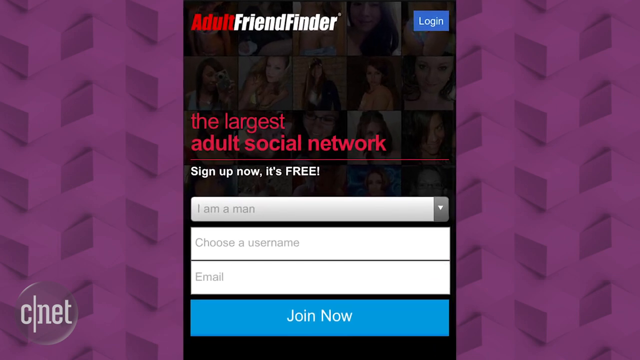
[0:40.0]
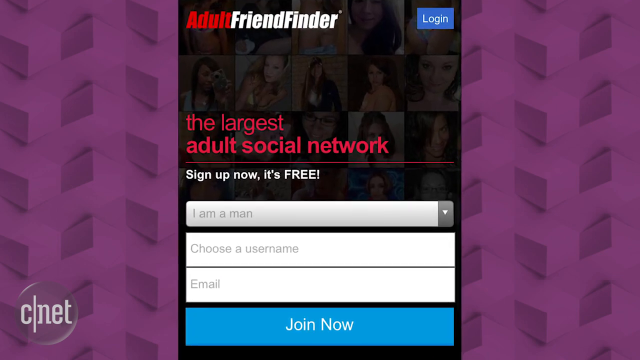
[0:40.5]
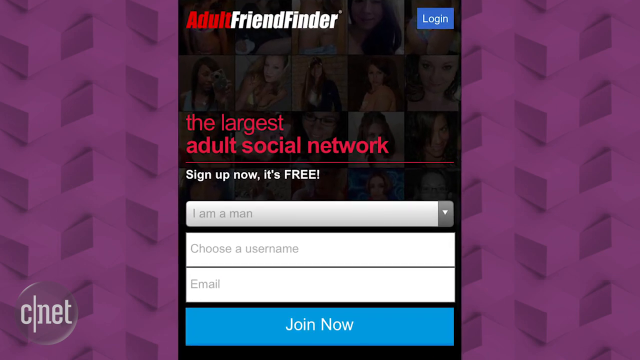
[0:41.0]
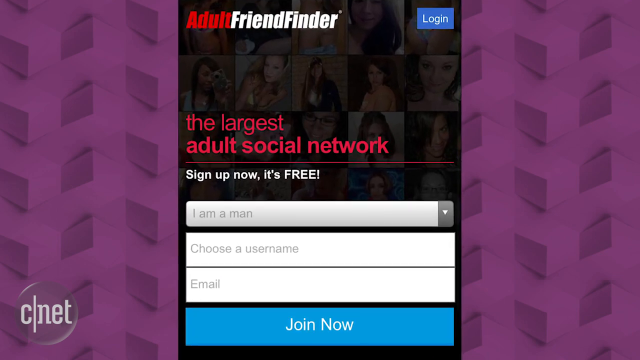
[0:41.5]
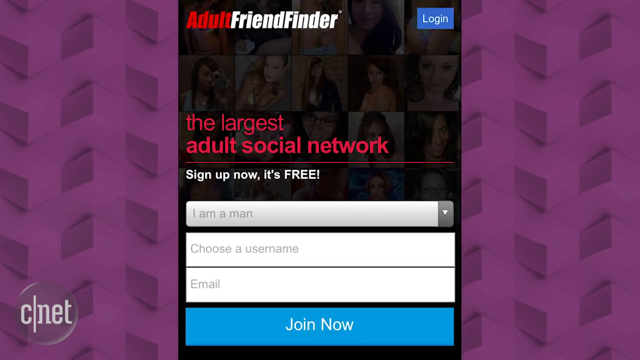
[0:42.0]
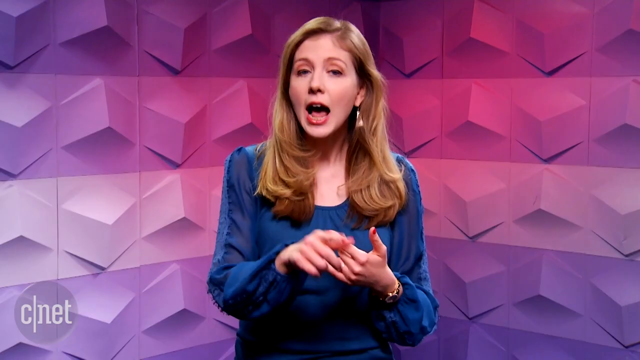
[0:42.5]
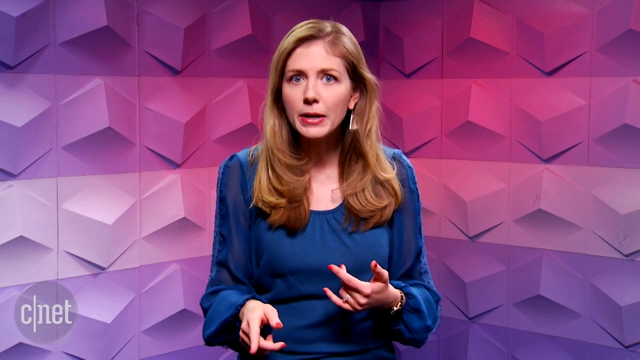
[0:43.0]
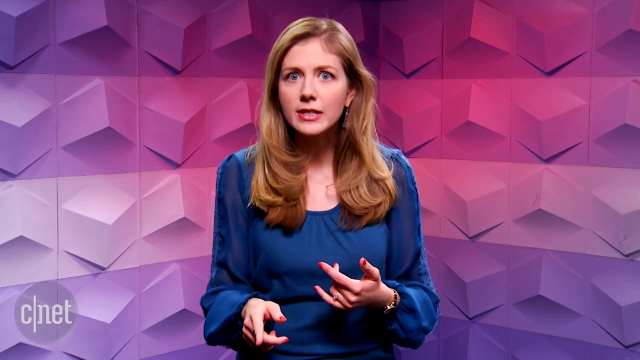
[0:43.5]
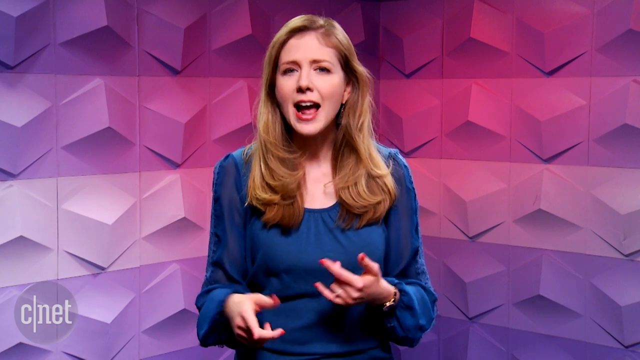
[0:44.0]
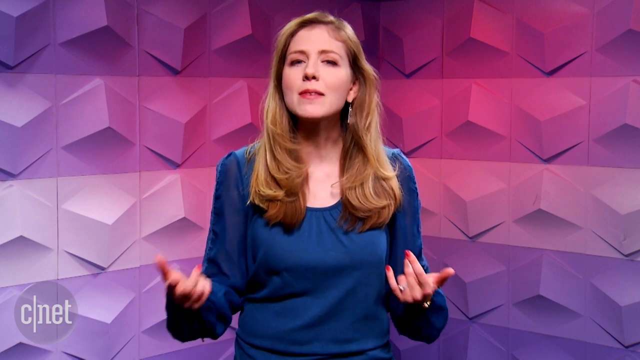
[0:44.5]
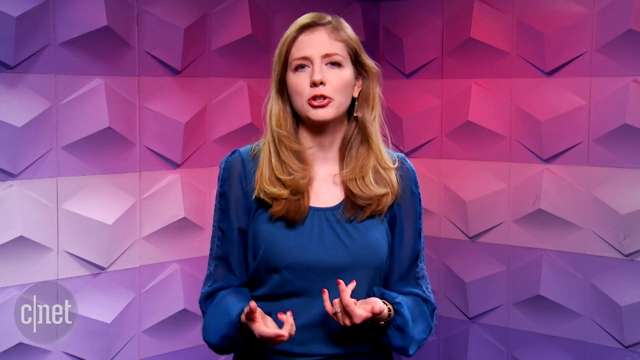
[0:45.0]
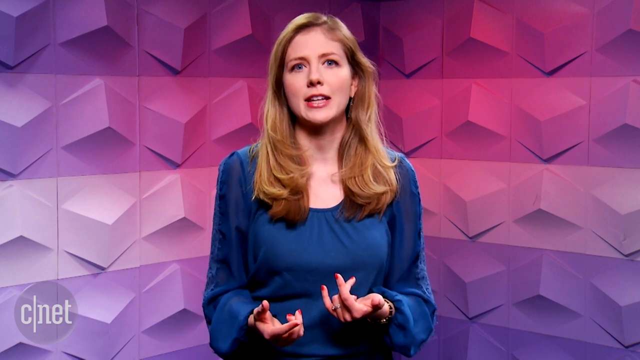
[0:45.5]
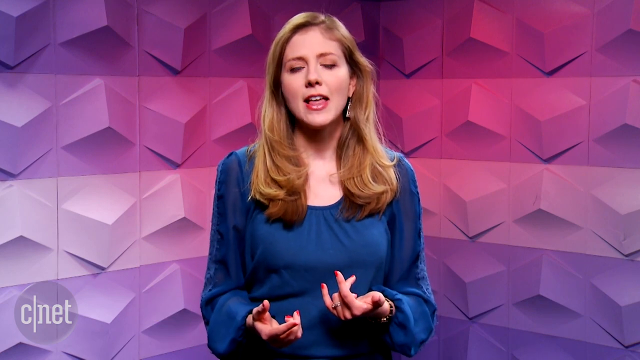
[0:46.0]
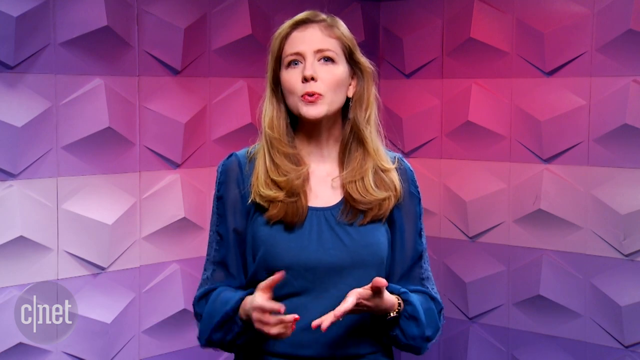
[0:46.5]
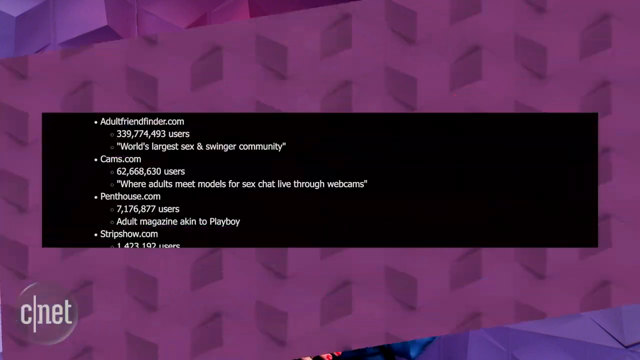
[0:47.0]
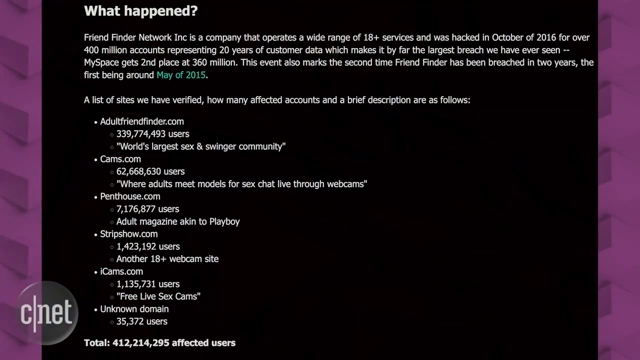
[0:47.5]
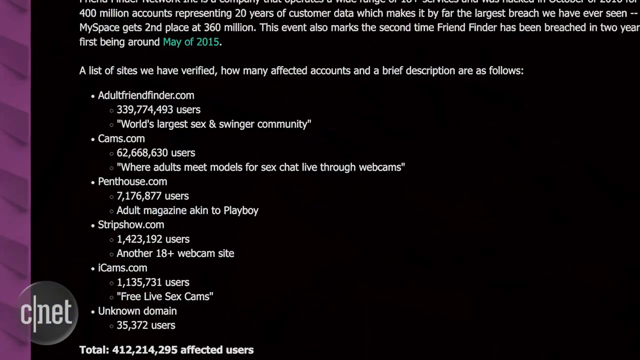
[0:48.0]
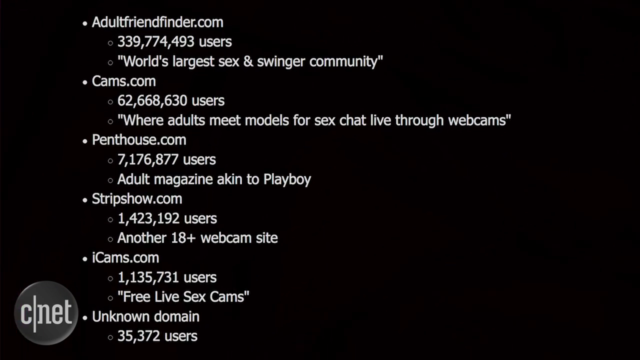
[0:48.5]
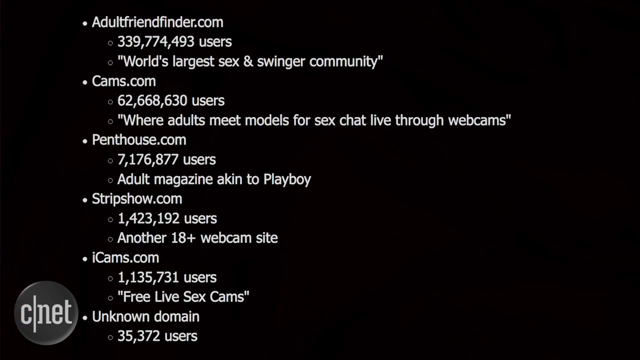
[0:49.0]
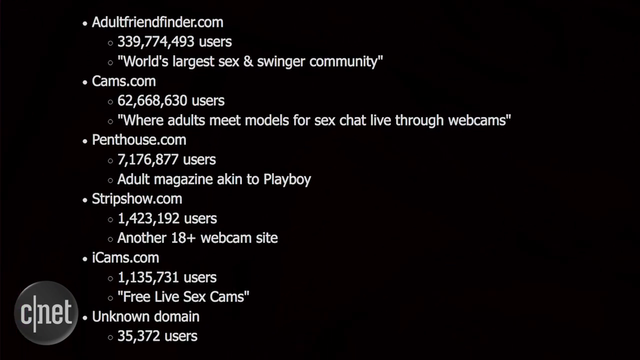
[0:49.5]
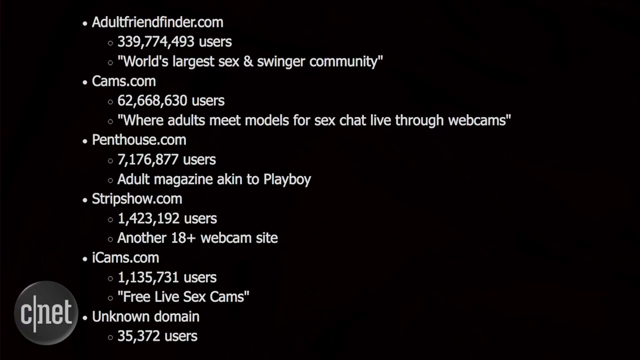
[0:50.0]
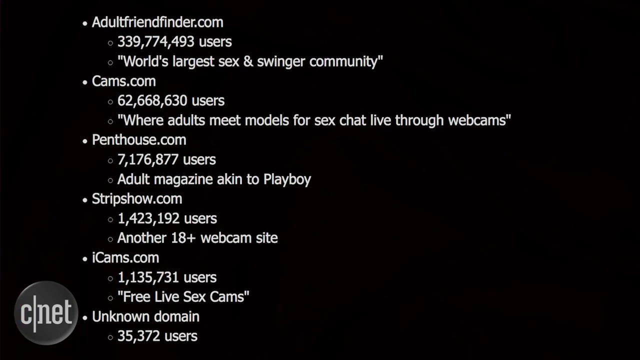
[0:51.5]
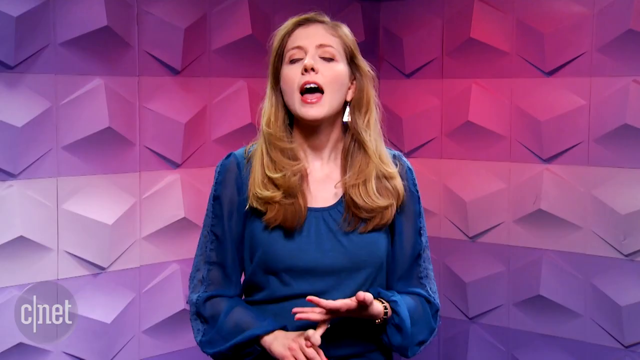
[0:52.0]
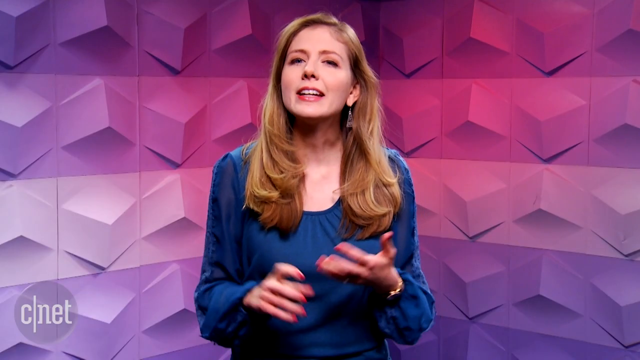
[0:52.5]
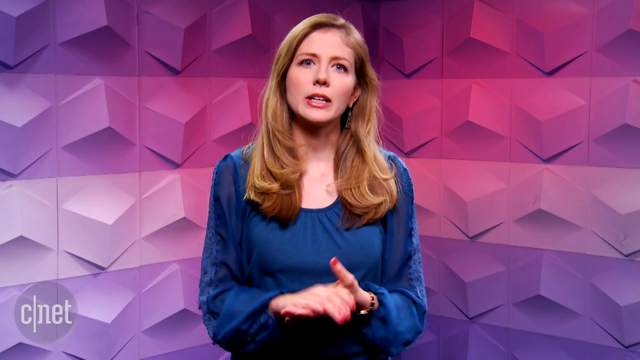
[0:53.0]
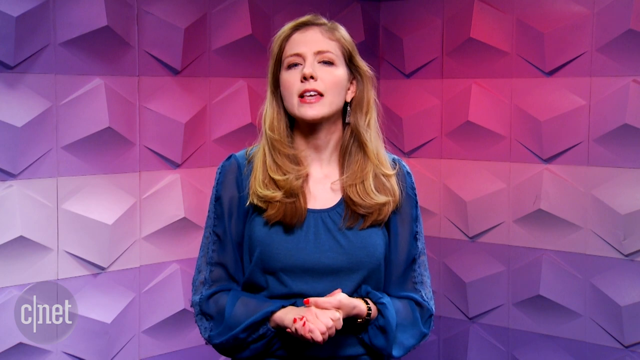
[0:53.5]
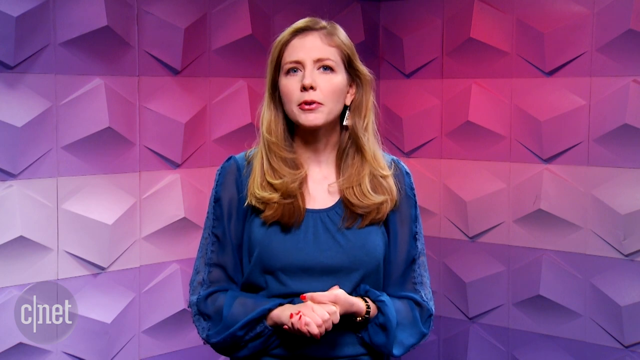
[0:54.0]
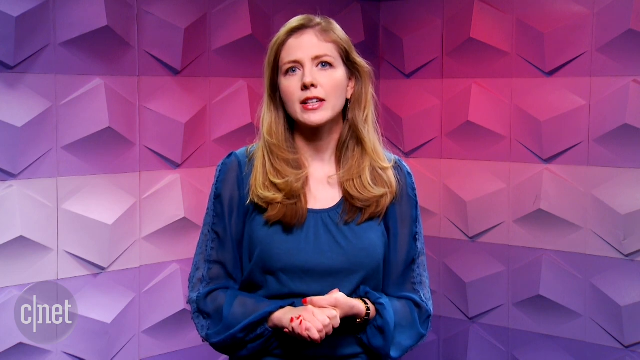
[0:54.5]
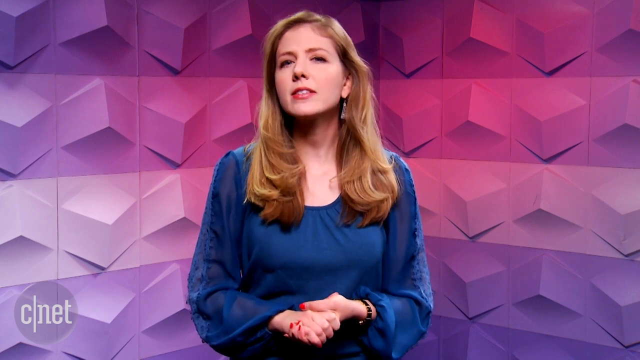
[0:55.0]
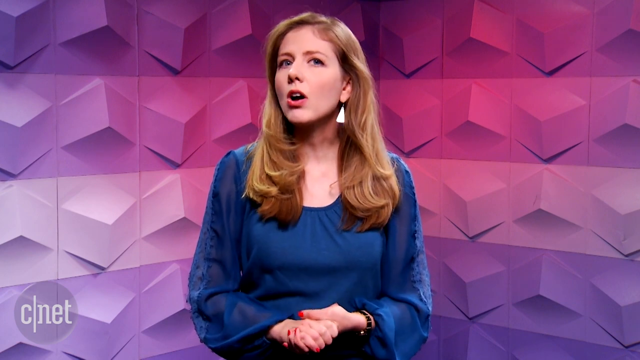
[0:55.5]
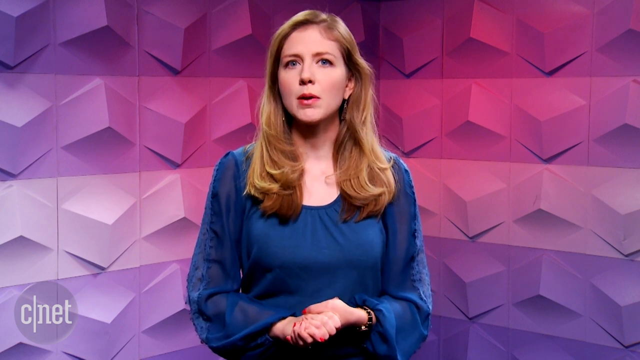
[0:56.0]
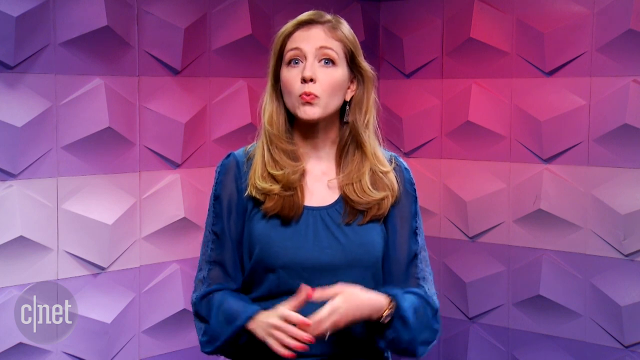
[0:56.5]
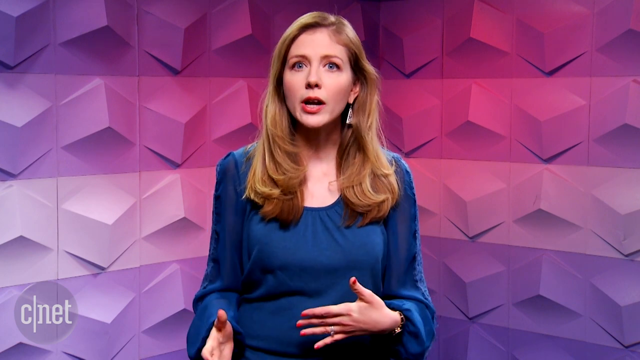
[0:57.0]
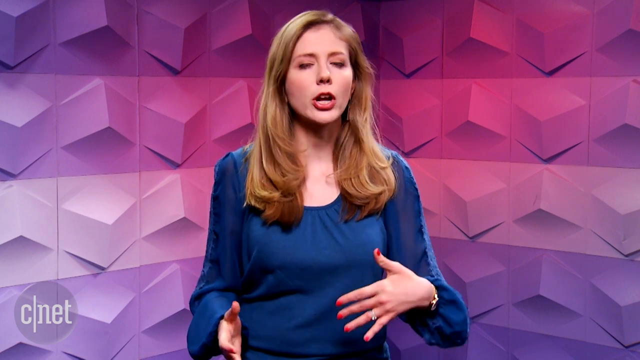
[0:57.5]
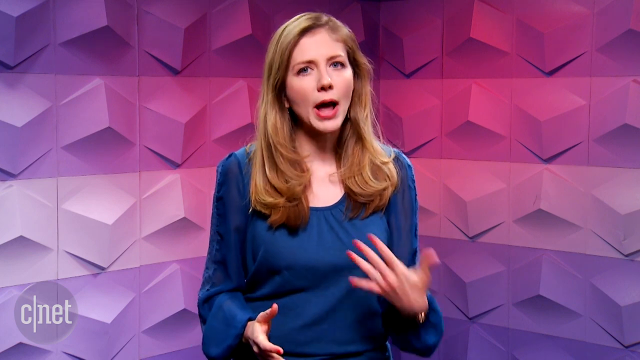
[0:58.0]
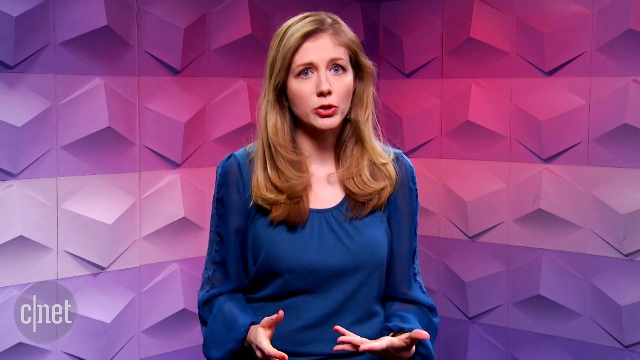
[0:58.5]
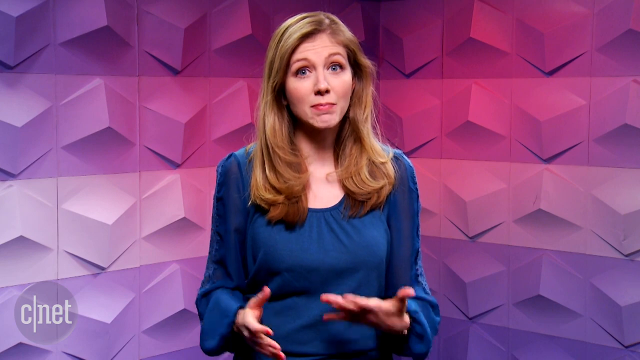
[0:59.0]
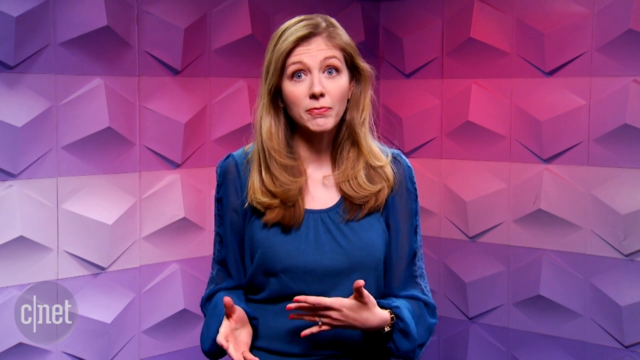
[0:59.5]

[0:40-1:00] The video continues to show how to join the Friend Finder adult network: the form asks for gender and email address, with a "join now" button, and there is also a field to choose a username. Bridget appears to be explaining more. The words "the largest adult social network" are written in bright red, along with "sign up now," and there is a login option in the top right corner.